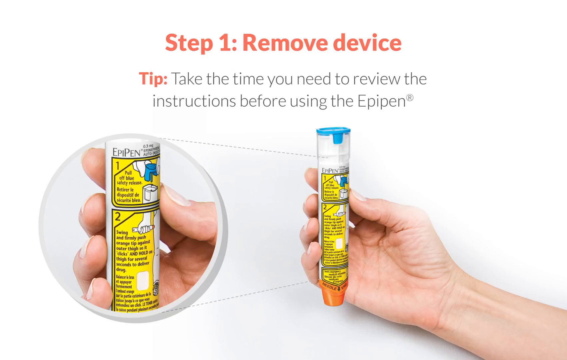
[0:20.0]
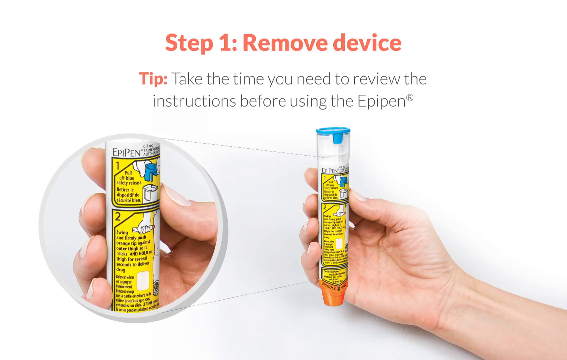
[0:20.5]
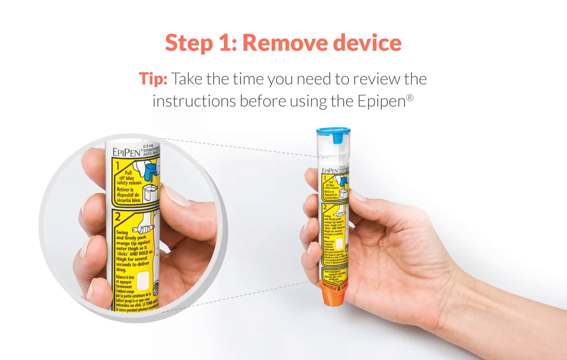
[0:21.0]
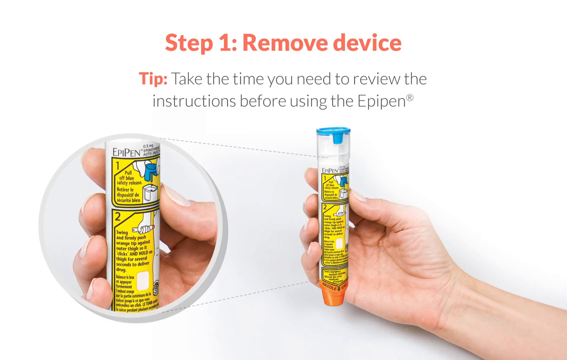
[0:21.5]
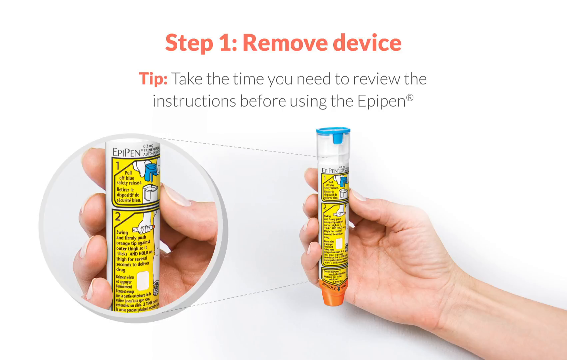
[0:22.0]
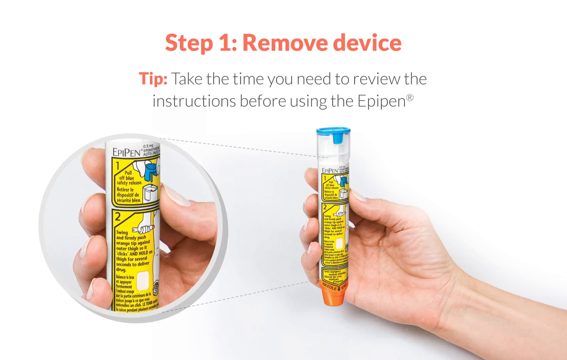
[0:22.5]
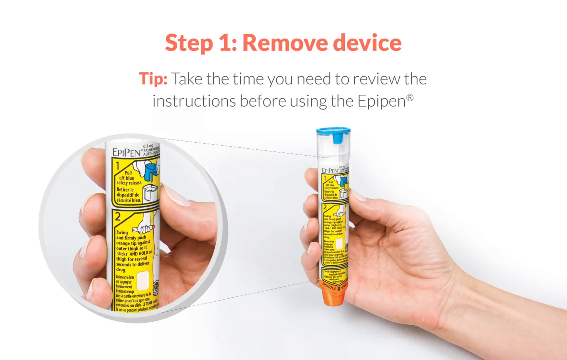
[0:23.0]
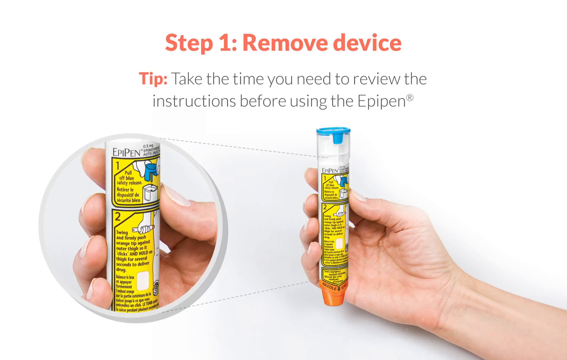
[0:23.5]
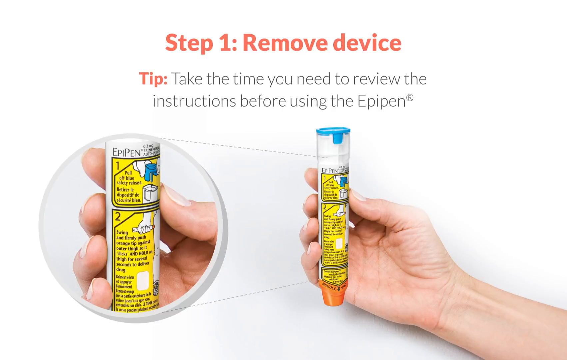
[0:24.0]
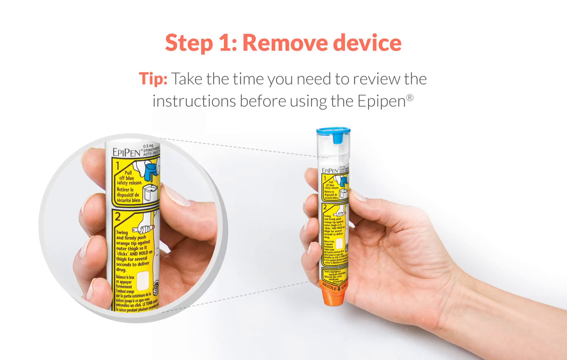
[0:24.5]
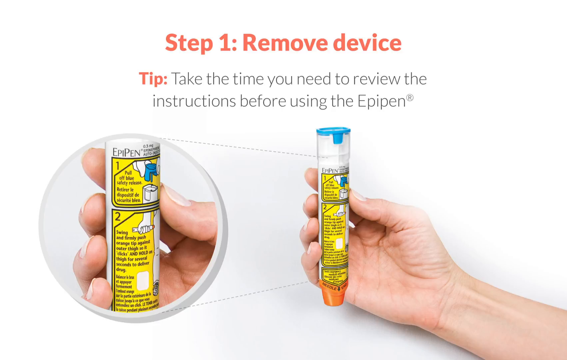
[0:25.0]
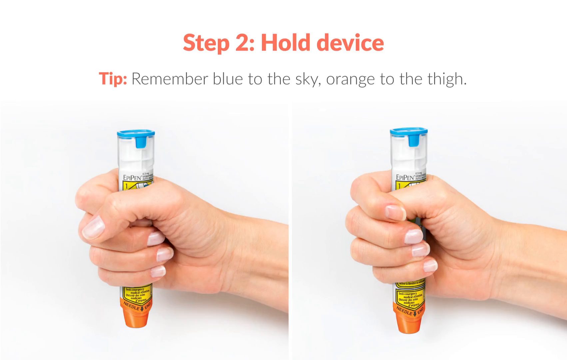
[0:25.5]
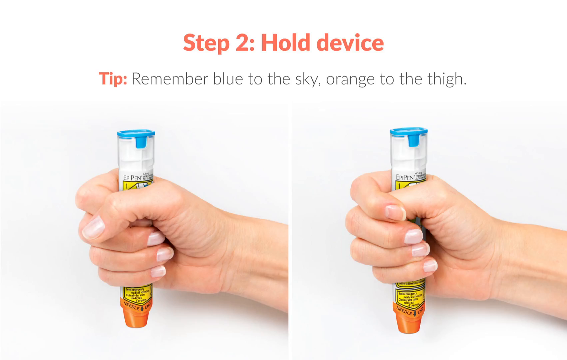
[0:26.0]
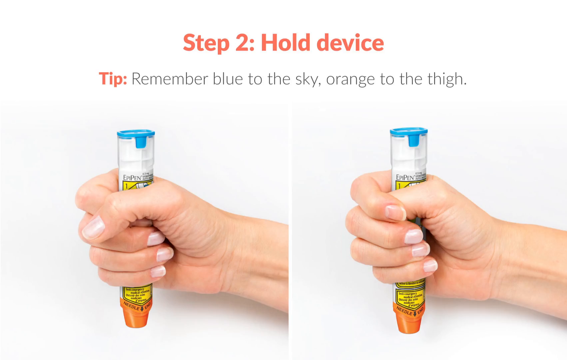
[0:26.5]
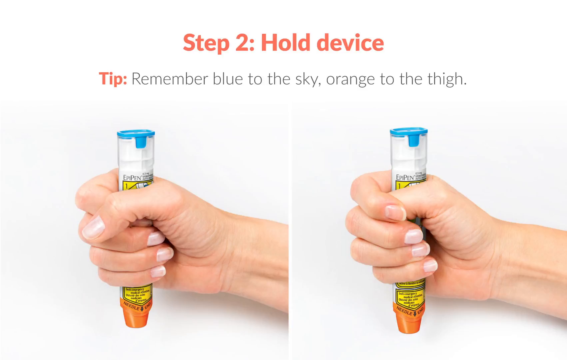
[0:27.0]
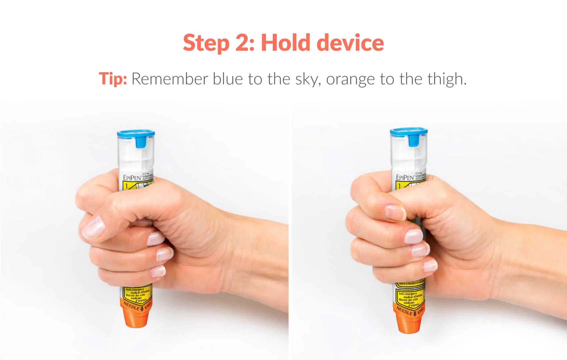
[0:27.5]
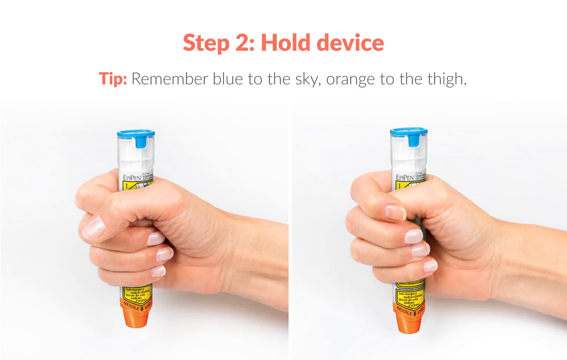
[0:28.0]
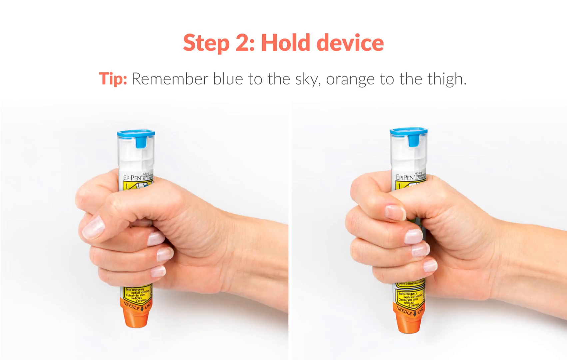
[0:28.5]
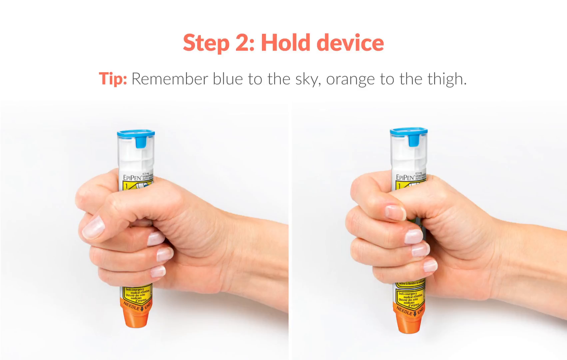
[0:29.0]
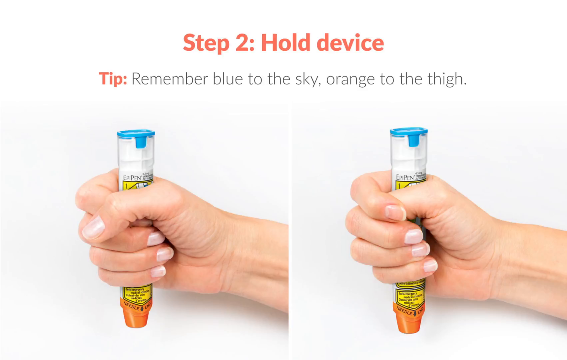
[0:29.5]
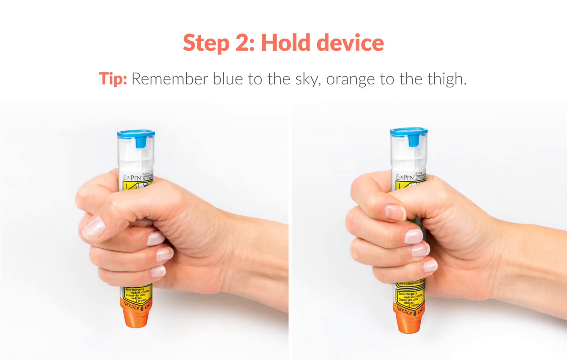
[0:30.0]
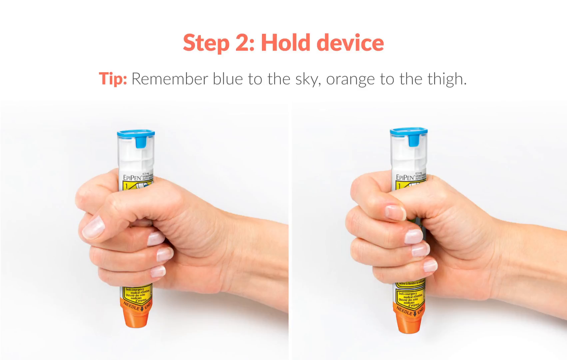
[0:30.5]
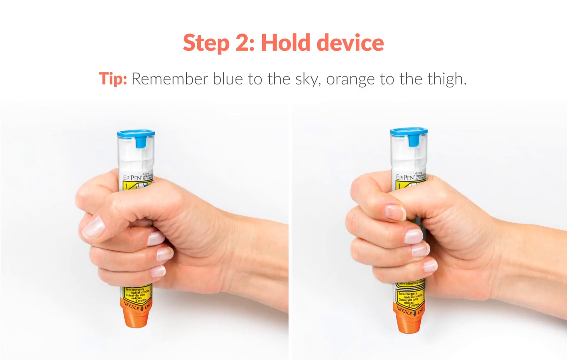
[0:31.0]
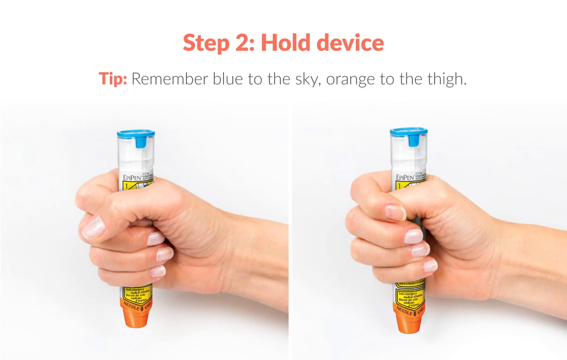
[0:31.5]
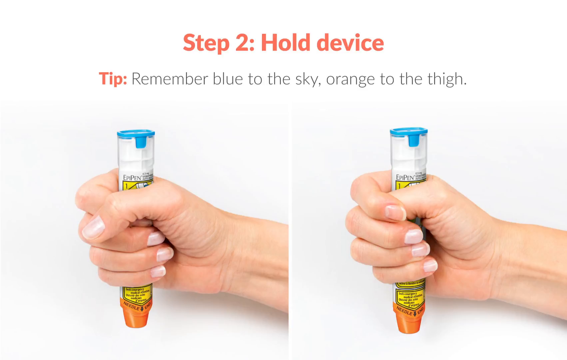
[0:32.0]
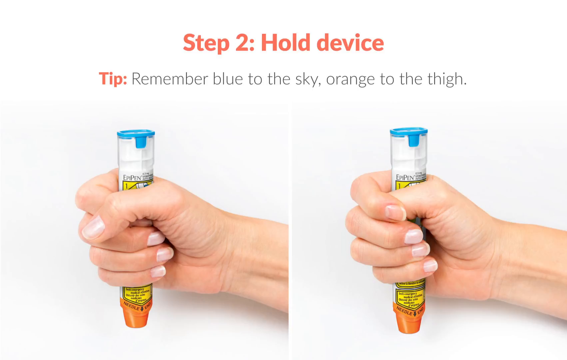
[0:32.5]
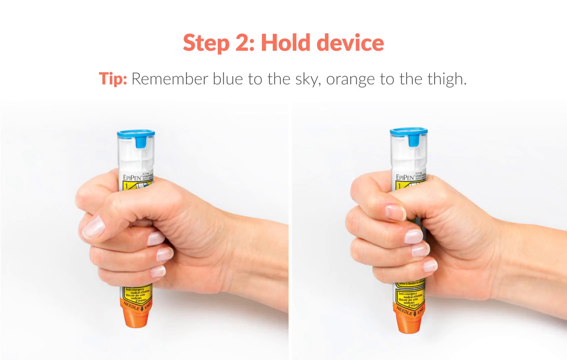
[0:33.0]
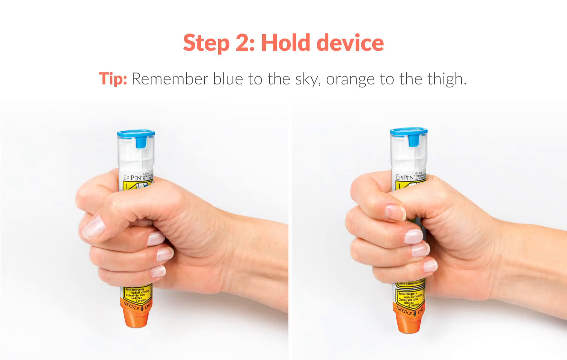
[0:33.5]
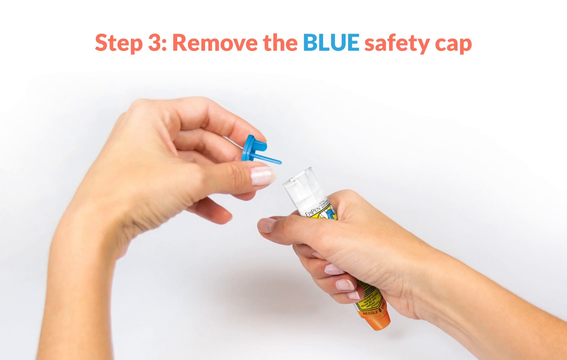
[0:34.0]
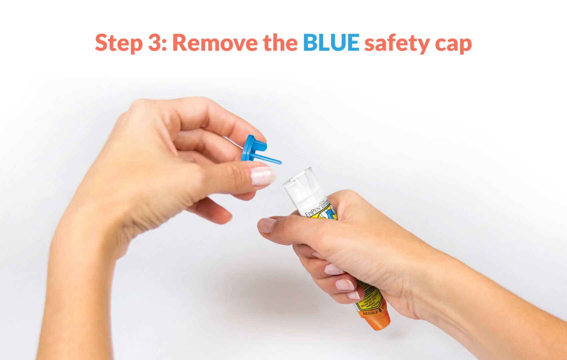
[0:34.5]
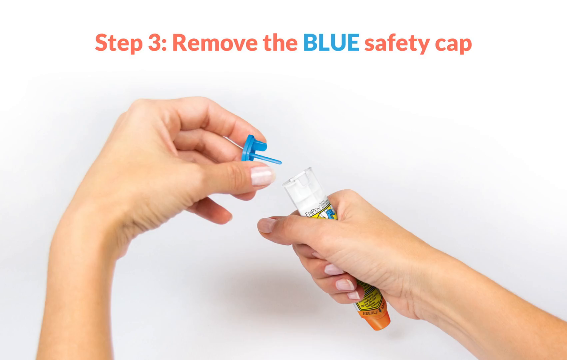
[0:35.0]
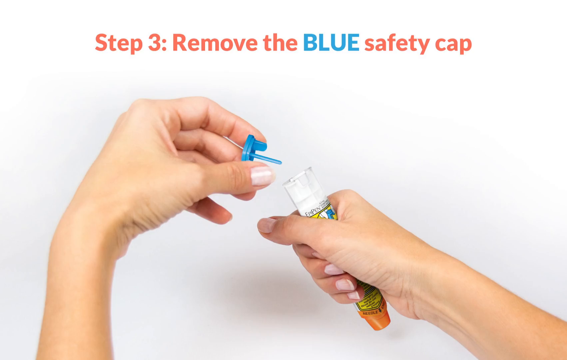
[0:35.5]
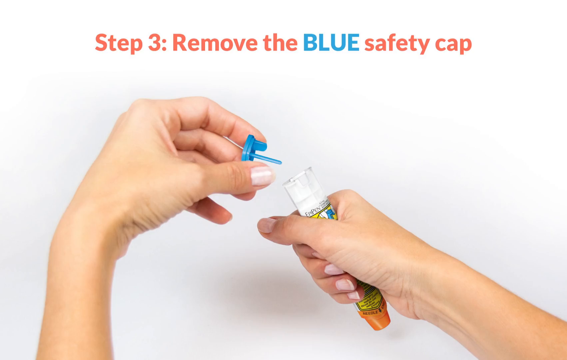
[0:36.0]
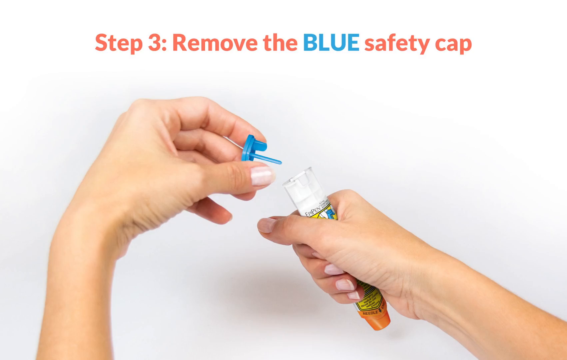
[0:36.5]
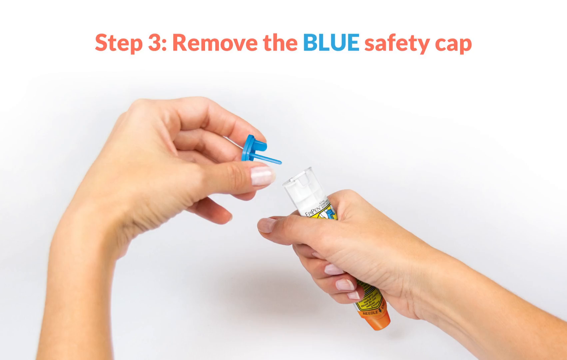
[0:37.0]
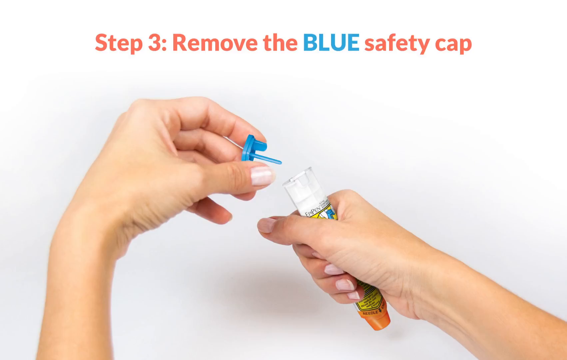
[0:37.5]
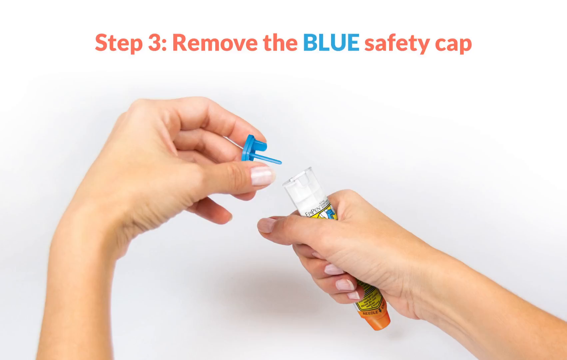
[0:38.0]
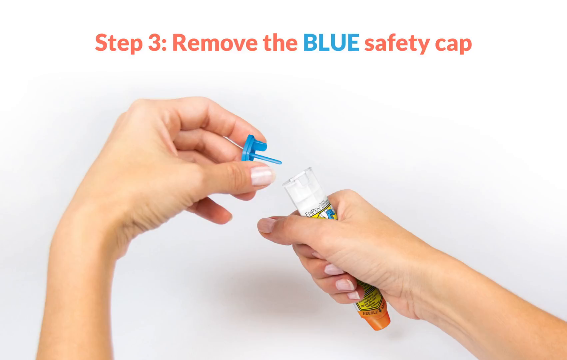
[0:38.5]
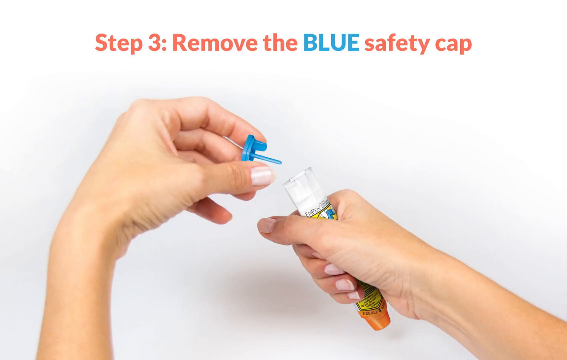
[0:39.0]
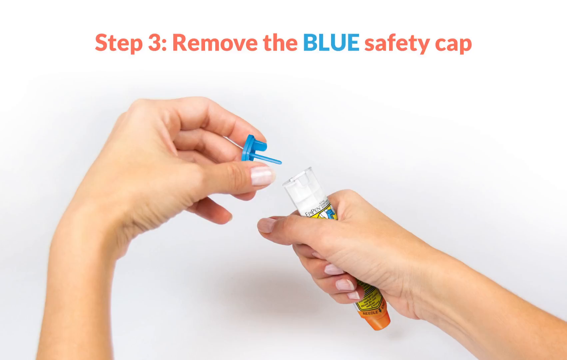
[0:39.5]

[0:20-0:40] The instructions begin with step one, "remove the device." Below the heading is a tip: "Take the time you need to review the instructions before using the EpiPen." A picture on the slide shows the device removed from the clear plastic storage and held in a person's right hand between fingers and thumb. A close-up of the EpiPen's surface shows two steps of directions, though not clearly enough to read them. The picture then fades away and is replaced by step two, "hold the device," with the tip "remember blue to the sky orange to the thigh." Two views show someone holding an EpiPen very tightly in their right fist: in the view on the left the thumb is outside the fist, and in the otherwise identical view on the right the thumb is inside the fist, apparently showing that either hold is acceptable. In both, the blue cap points directly upward and the orange cap directly downward. The video then moves to step three, "remove the blue safety cap," where the EpiPen is still held in a right hand, thumb outward, while the left hand removes the blue safety cap from the top of the device.